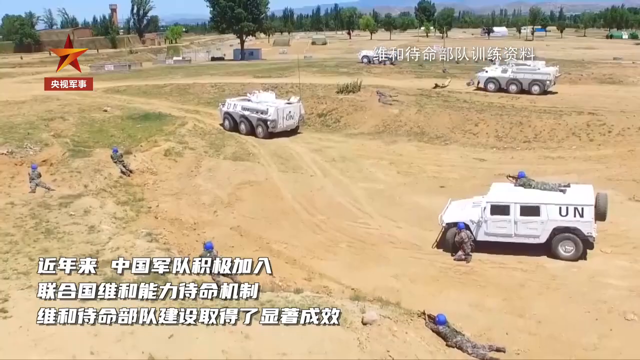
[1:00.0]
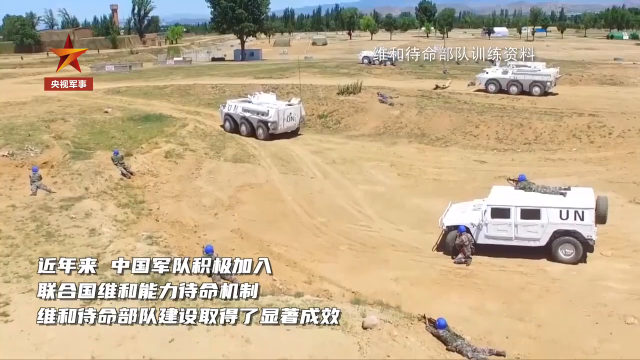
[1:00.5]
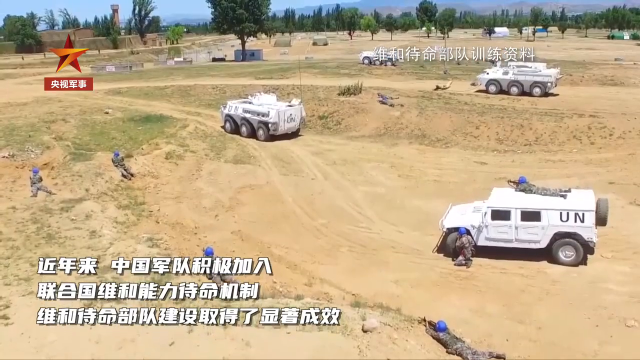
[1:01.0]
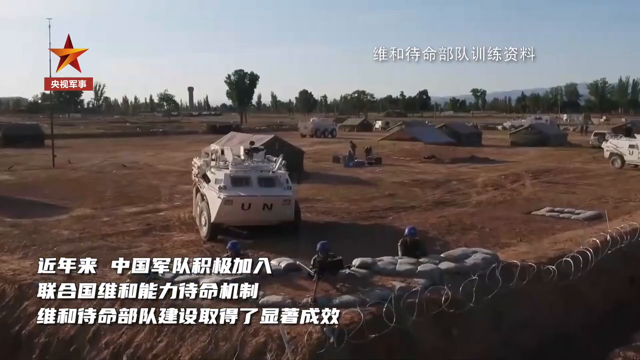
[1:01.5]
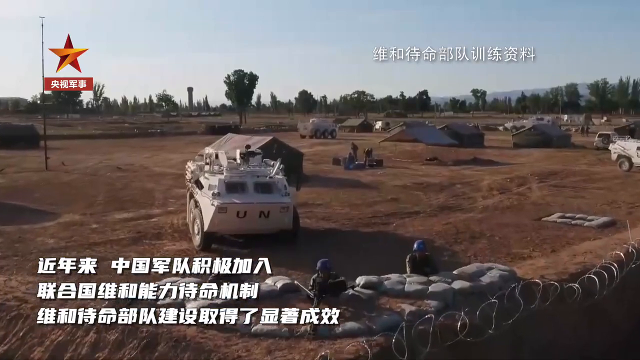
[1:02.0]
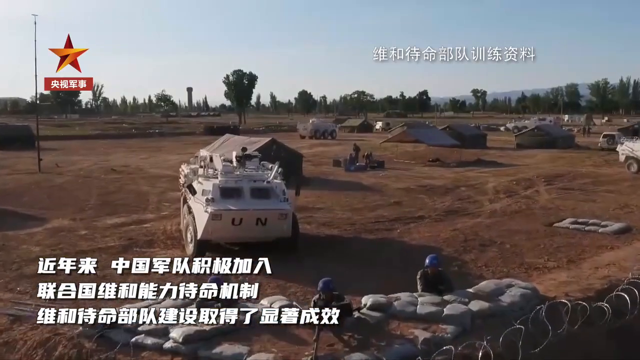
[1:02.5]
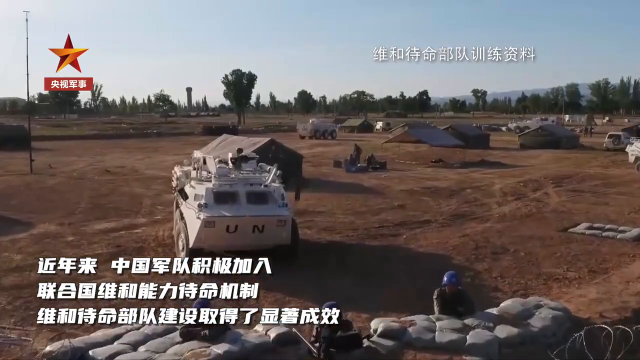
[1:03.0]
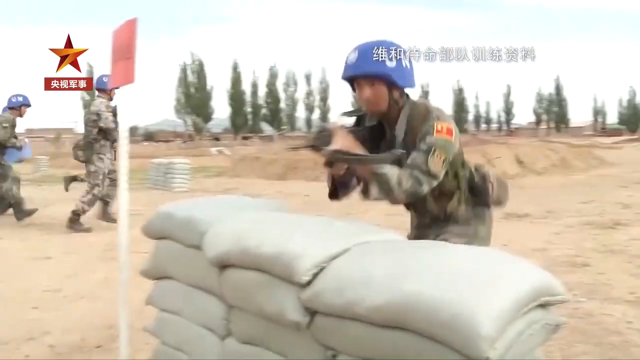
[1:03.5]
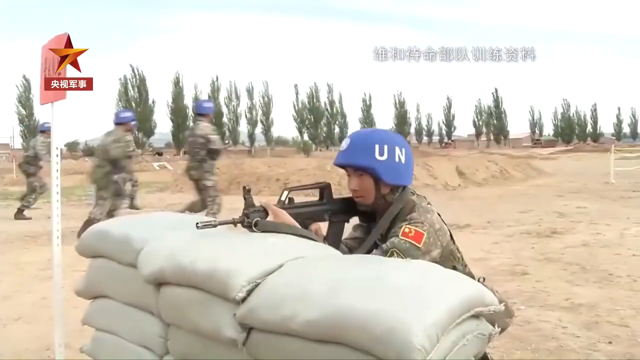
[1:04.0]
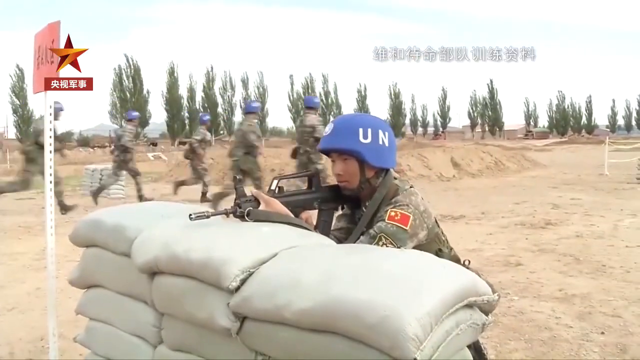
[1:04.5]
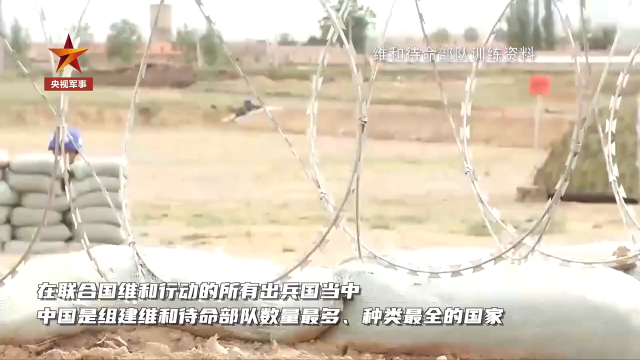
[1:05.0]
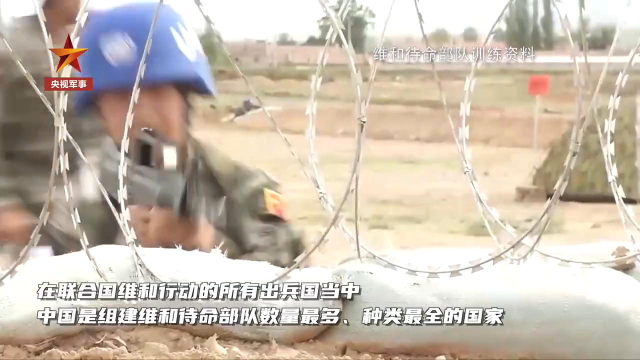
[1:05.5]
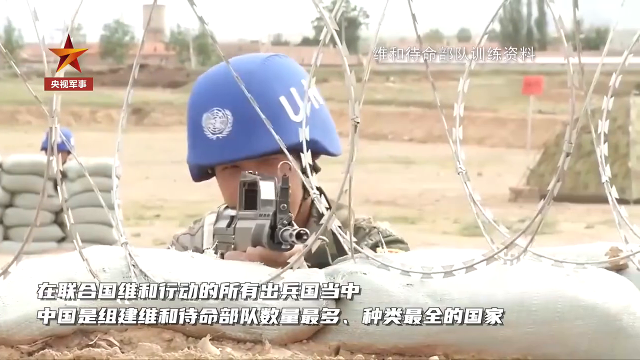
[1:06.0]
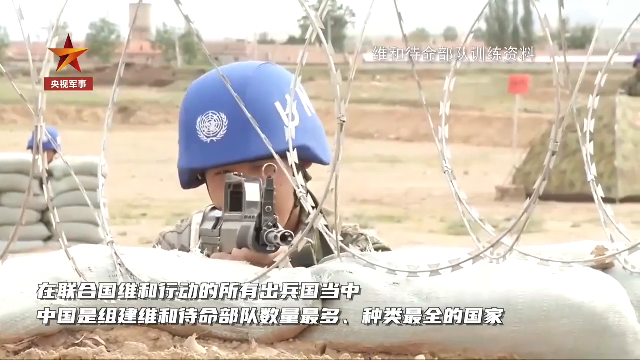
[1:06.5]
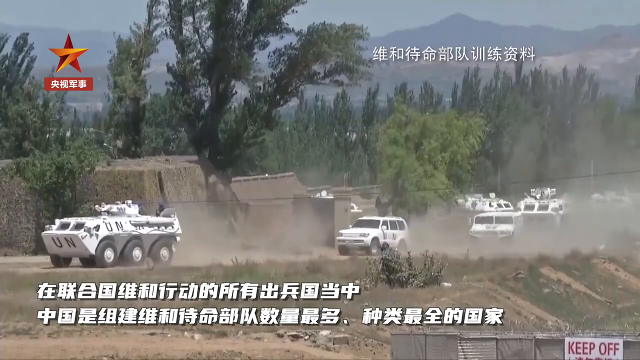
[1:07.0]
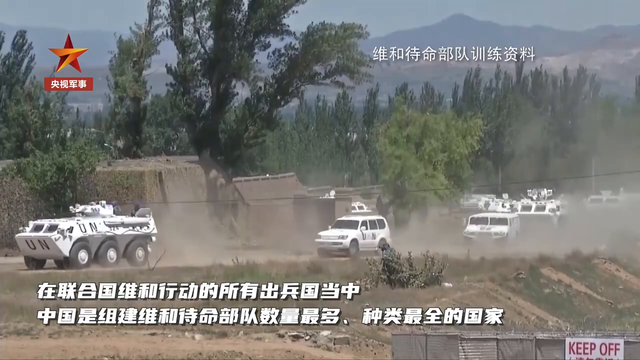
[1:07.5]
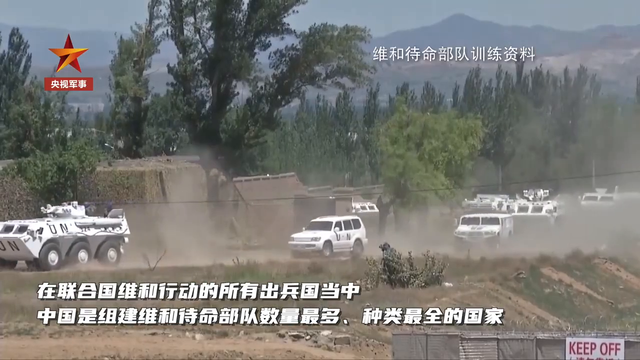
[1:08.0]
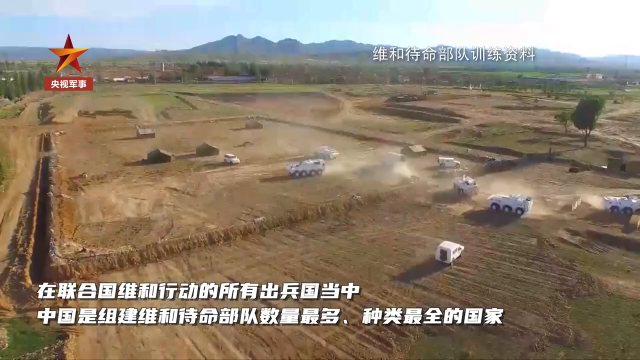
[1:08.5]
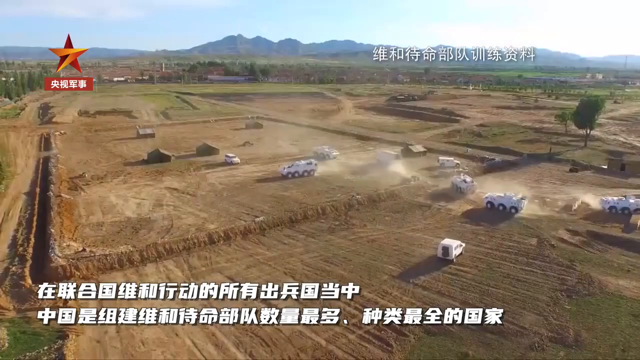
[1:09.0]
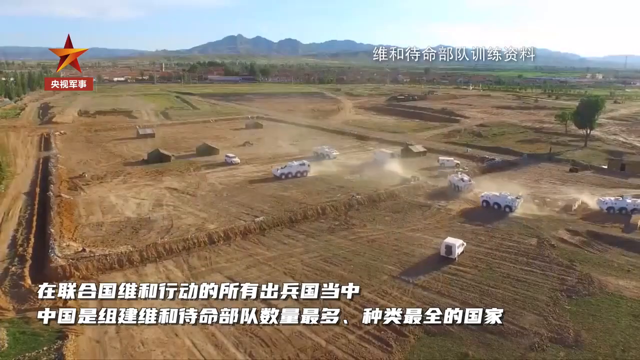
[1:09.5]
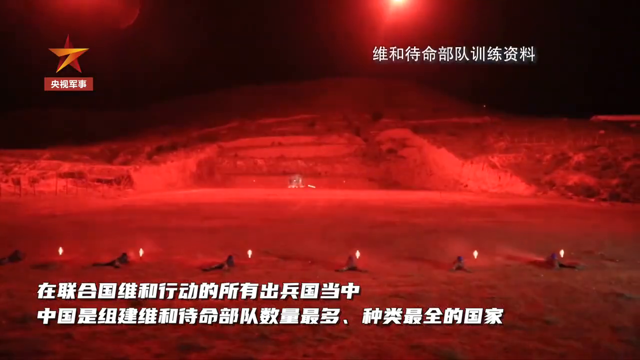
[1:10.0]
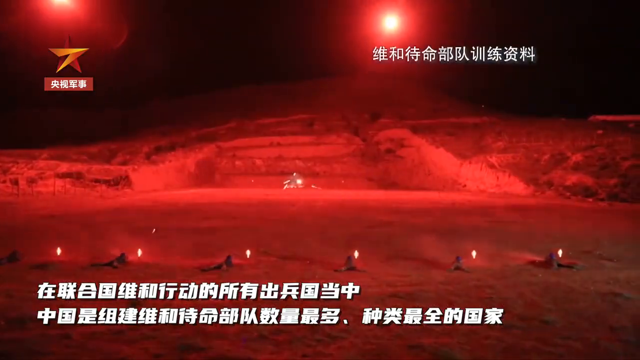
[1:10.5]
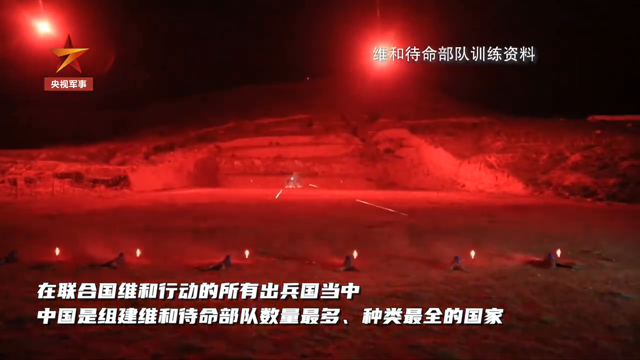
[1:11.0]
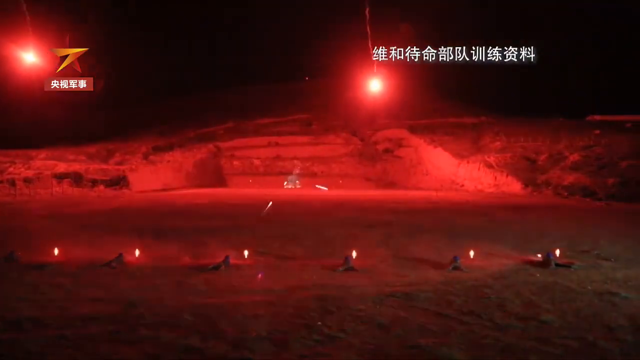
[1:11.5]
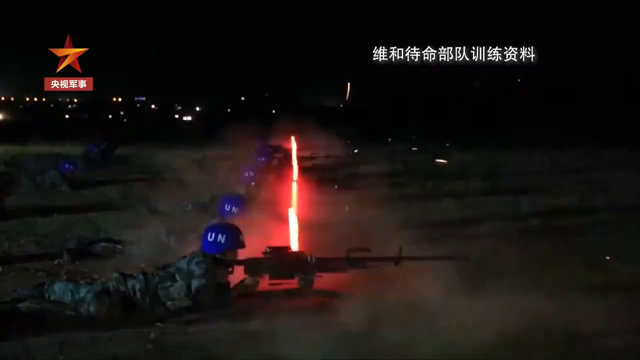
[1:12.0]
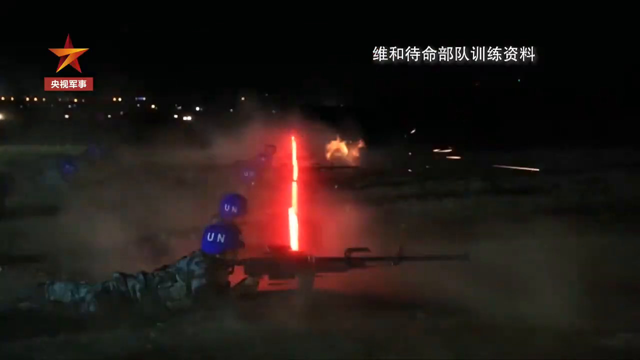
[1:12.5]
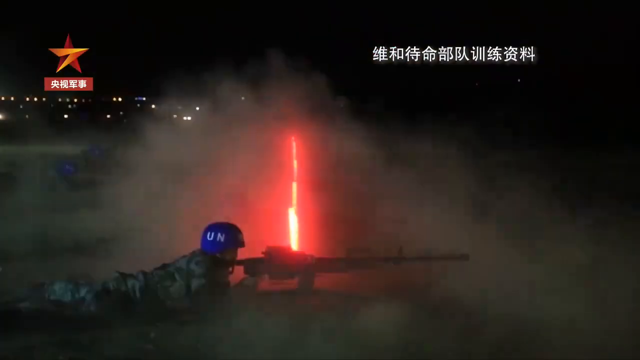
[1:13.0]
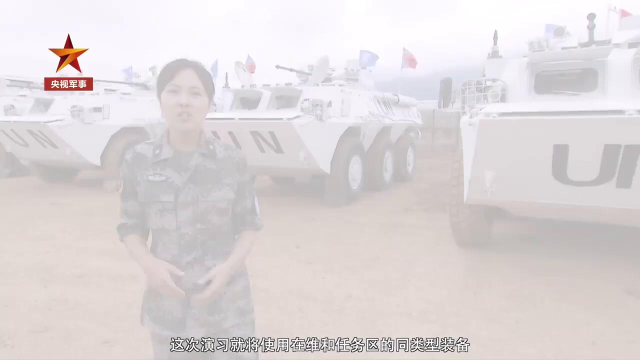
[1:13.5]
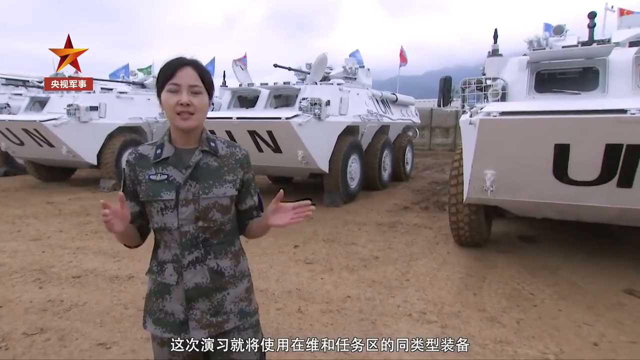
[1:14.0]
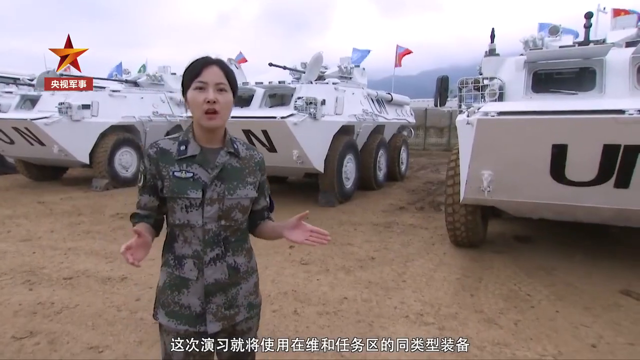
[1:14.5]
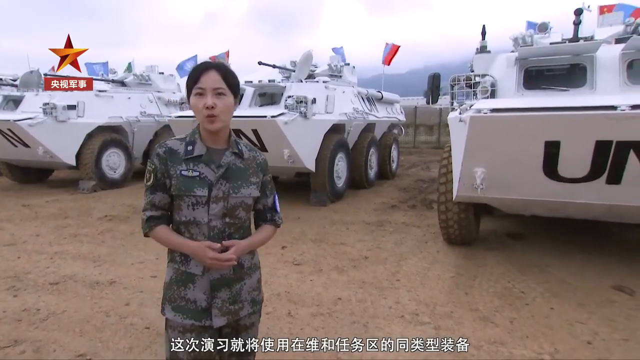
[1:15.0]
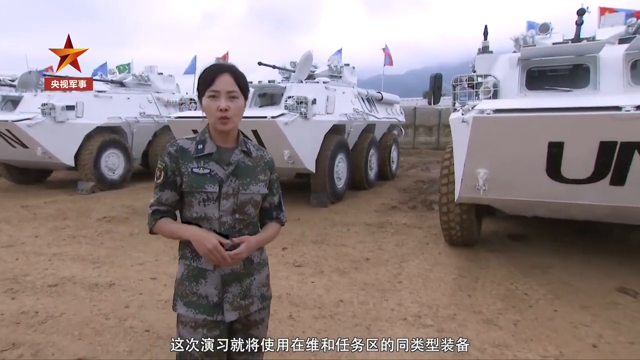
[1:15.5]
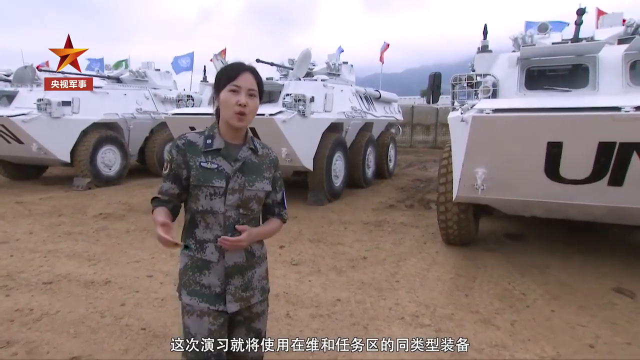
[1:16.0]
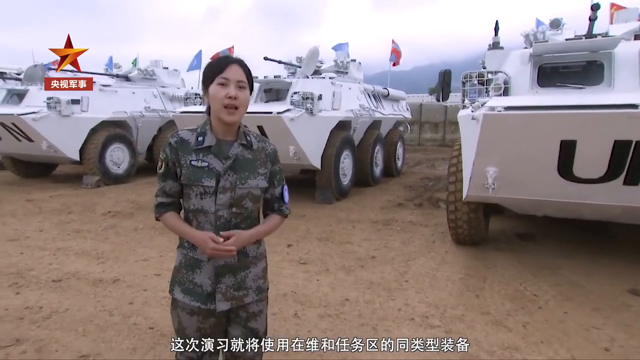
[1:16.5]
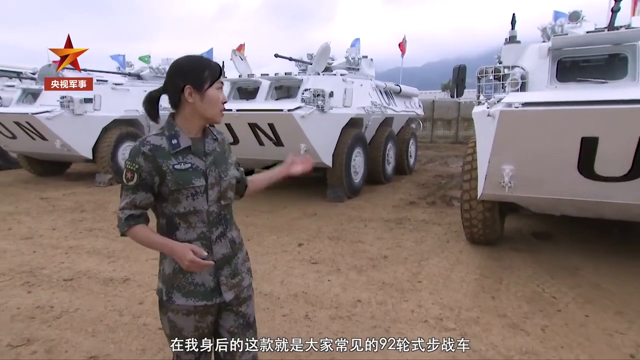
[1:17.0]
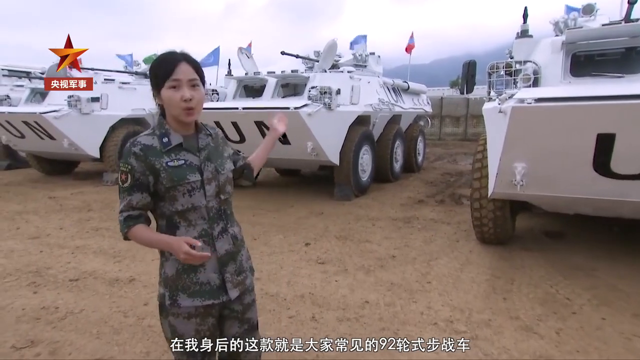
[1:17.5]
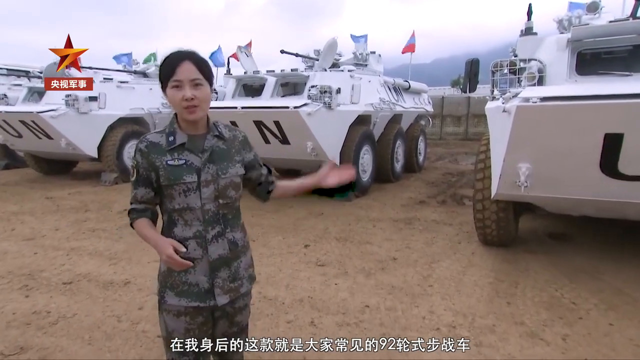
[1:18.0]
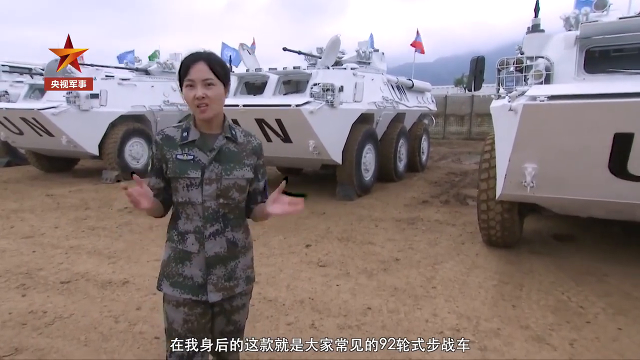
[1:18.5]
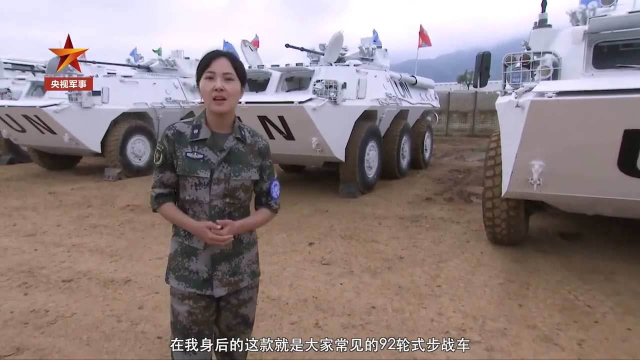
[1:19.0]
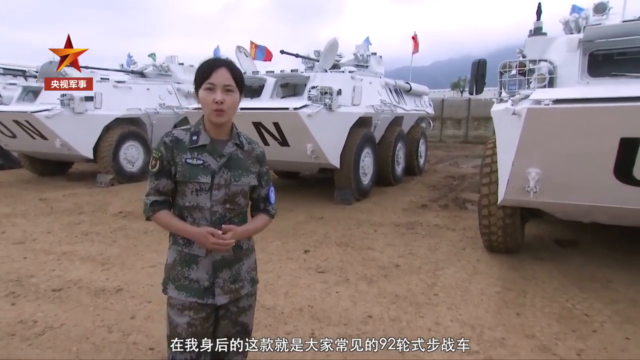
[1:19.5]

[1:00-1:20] Part of the UN facility is all earth with no greenery, a clearing where a UN tank is parked and a few tents are around. The camera pans over them, revealing that this might be part of a training ground. Sandbags are piled up, and men in army outfits and blue UN helmets, who all appear to be from East Asia, carry assault rifles. One of them crouches behind the sandbags and places the nozzle of his rifle on top. Another soldier gets into position behind more sandbags topped with razor wire. A long line of the white army vehicles, tanks and kind of Hummer-type vehicles, drives up the track. The shot changes to nighttime: the same area is lit up under red lighting, East Asian text appears in the top right of the screen, and the darkness explodes into flashes as gunfire is shot across the training ground.